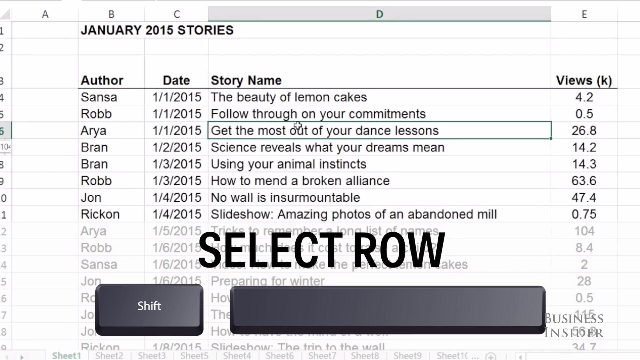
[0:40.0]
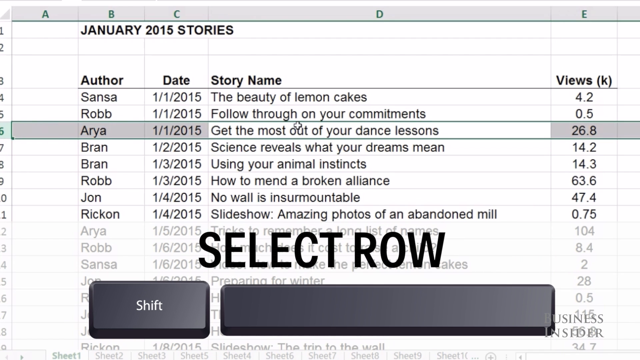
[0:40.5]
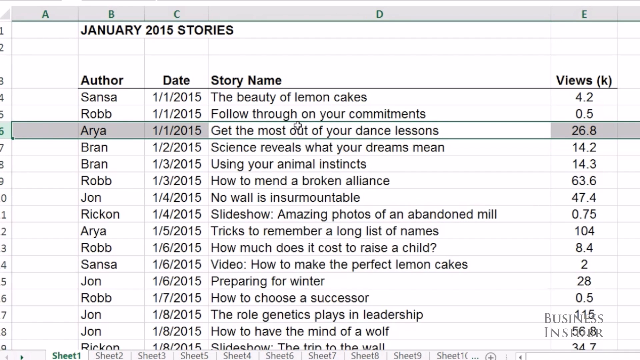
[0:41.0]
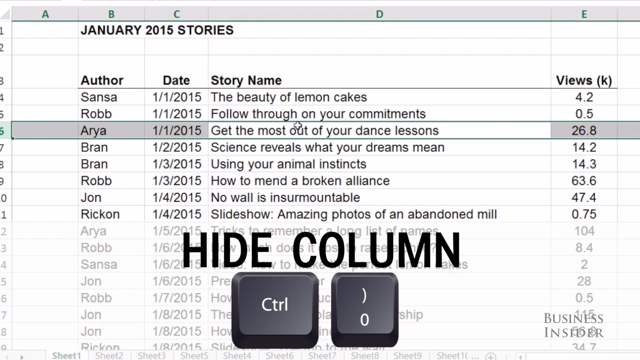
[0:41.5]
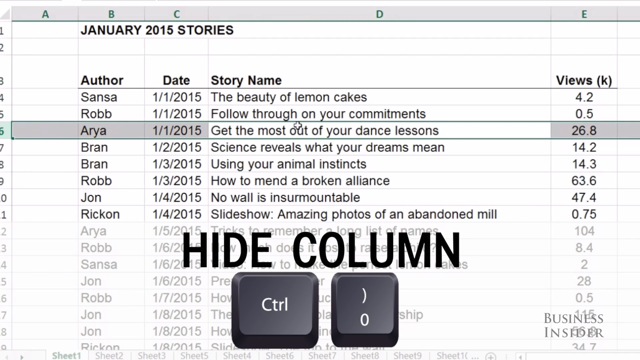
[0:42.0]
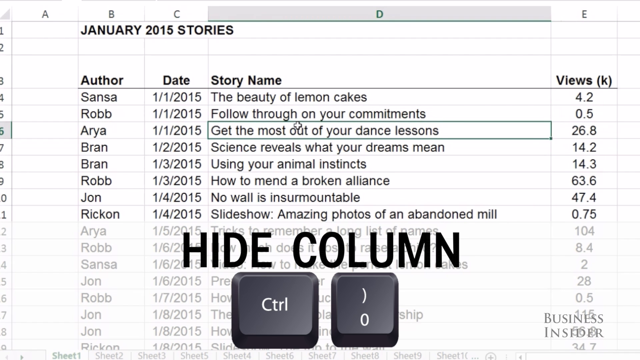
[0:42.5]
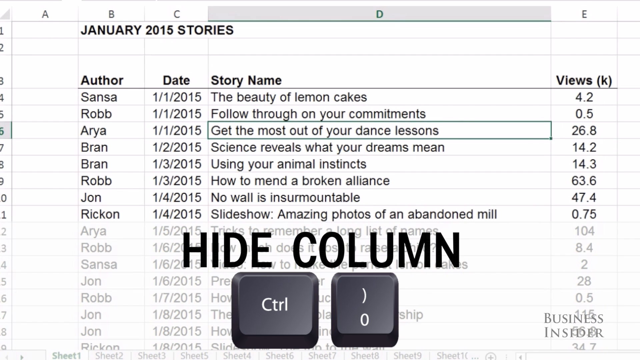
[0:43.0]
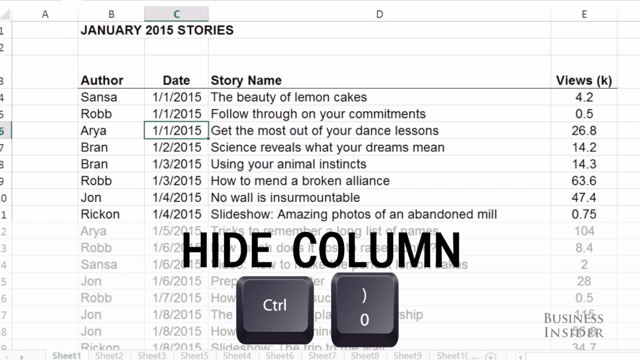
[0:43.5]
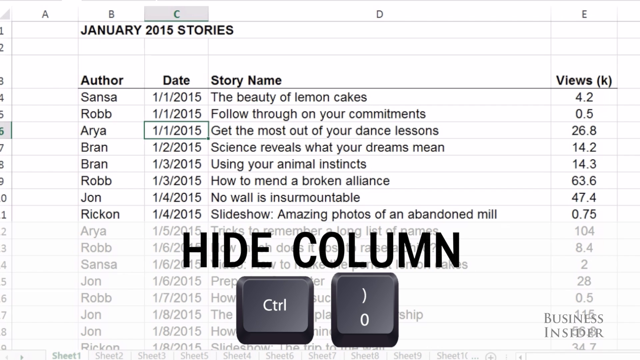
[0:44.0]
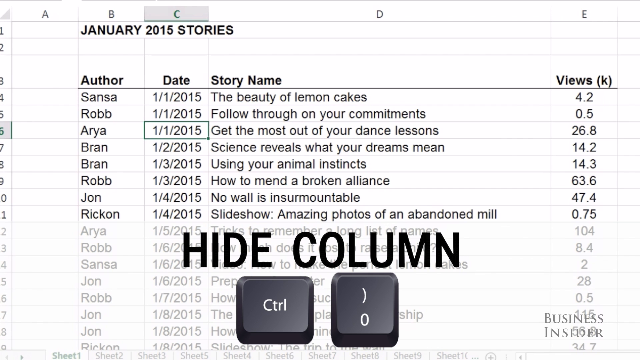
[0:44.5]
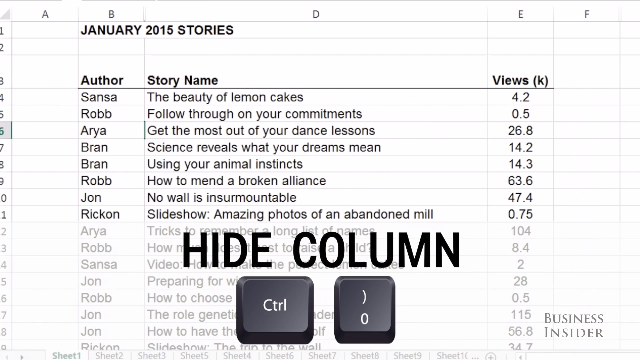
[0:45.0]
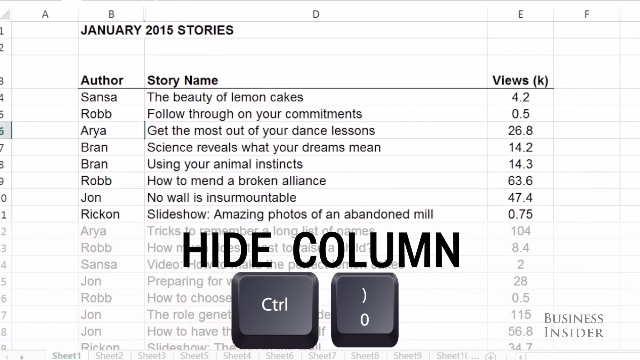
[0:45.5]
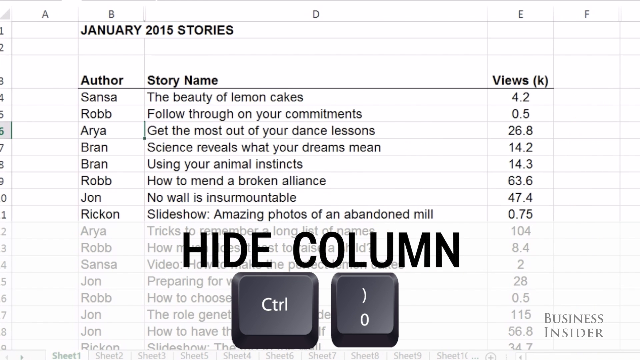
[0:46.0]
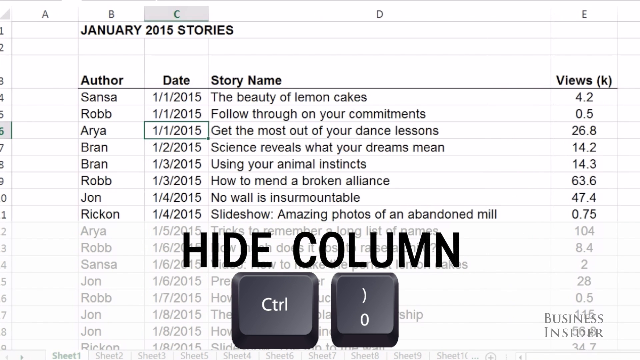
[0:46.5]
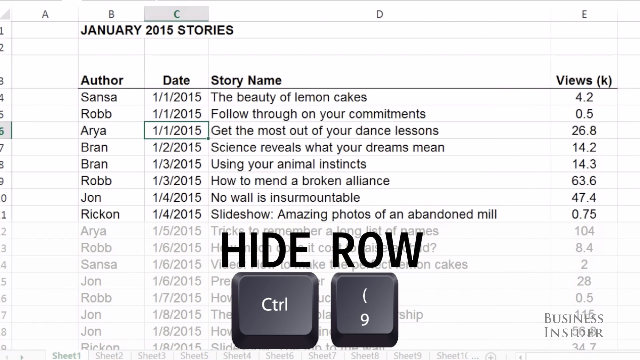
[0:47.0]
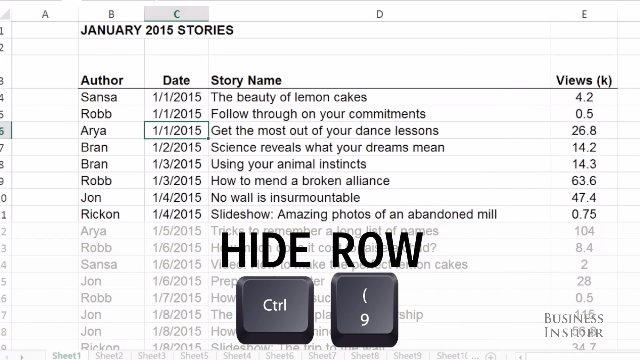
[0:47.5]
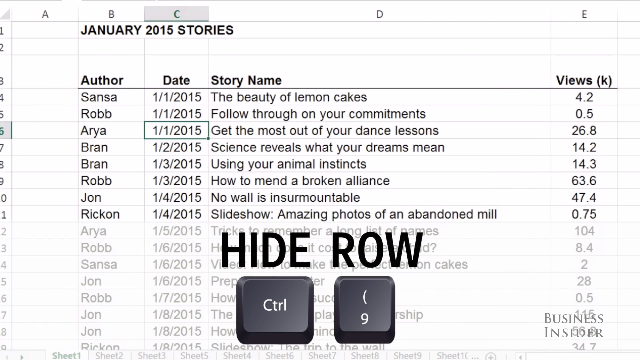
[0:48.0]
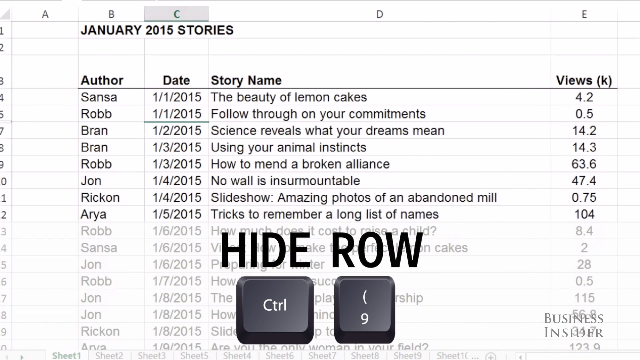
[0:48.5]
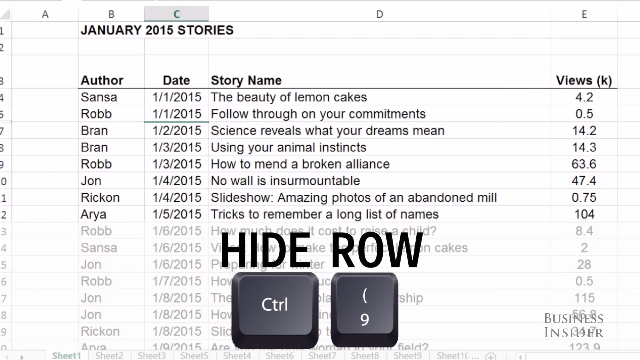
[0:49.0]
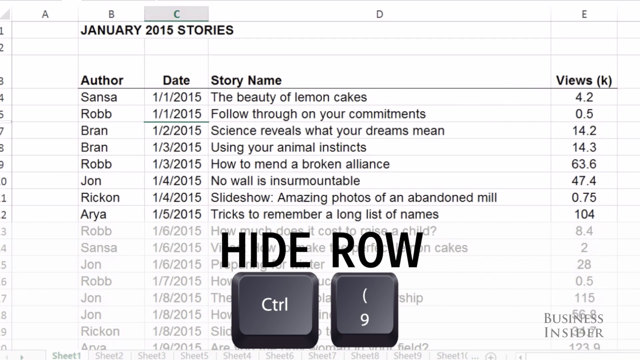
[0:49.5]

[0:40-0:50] A spreadsheet that appears to be an Excel spreadsheet is pulled up. Up top it reads "January 2015 stories," and the columns author, date, story name and views are listed, each with entries below. The text "Hide column" appears on the screen along with computer keys to hit, and it then changes to "Hide row." Someone seems to be going through different areas of the sheet and choosing different options.